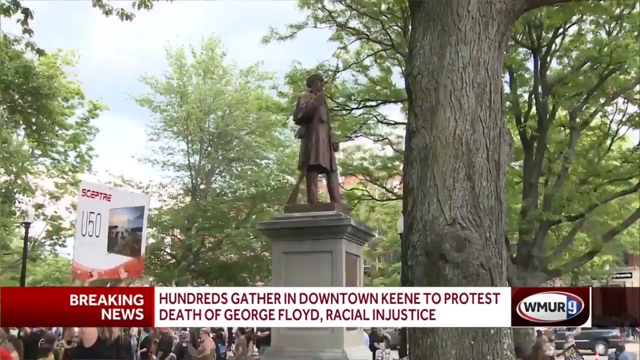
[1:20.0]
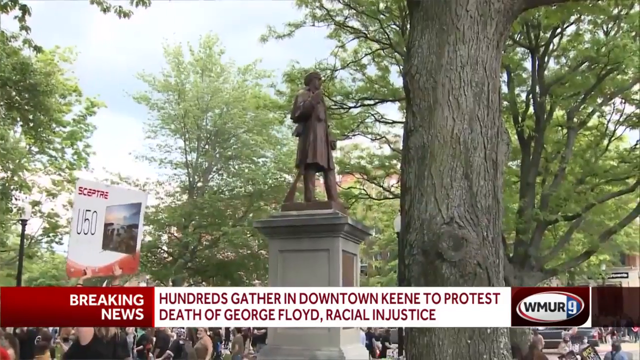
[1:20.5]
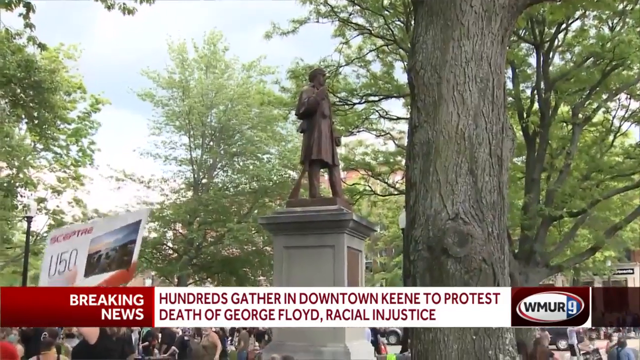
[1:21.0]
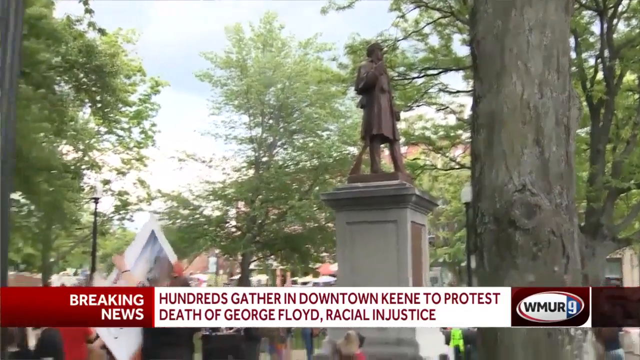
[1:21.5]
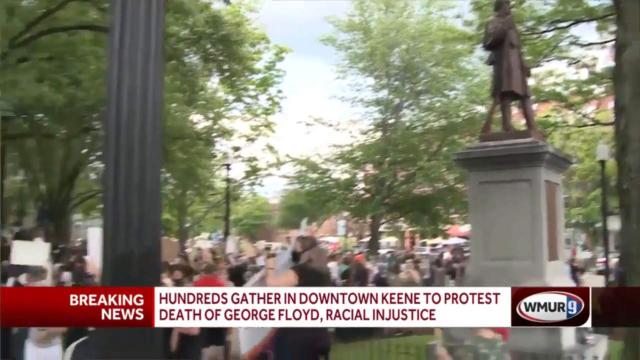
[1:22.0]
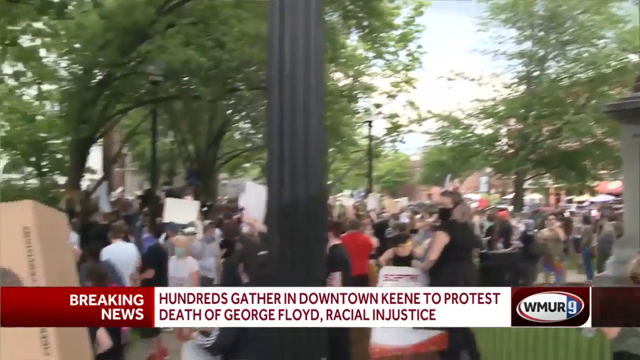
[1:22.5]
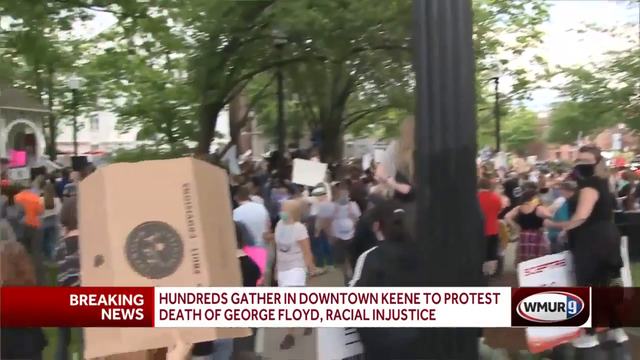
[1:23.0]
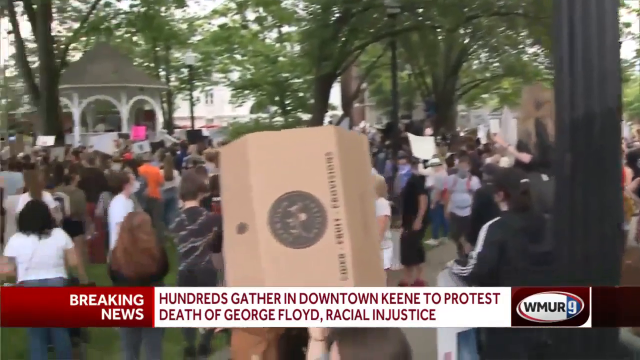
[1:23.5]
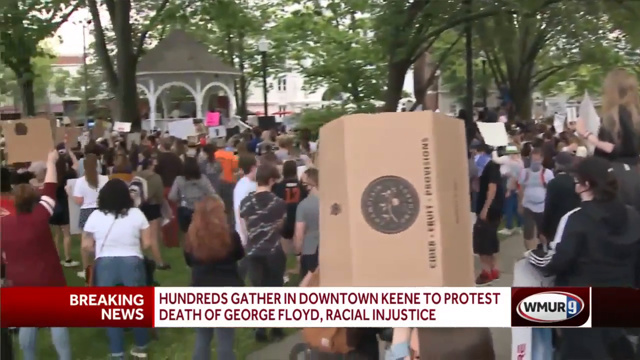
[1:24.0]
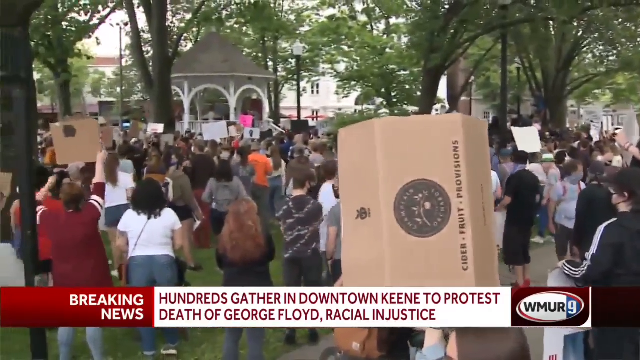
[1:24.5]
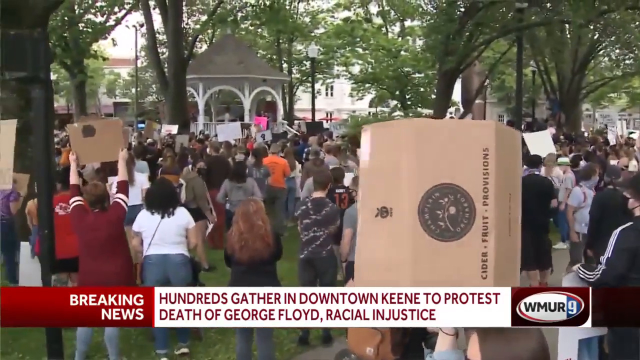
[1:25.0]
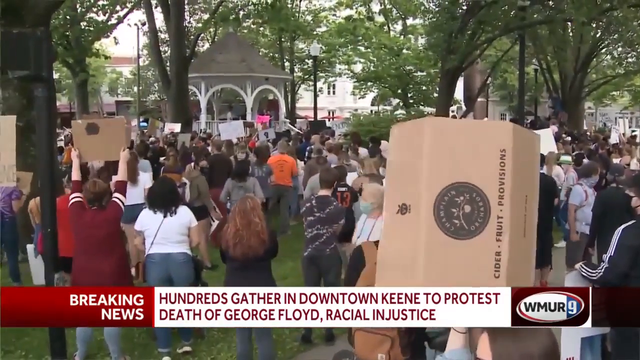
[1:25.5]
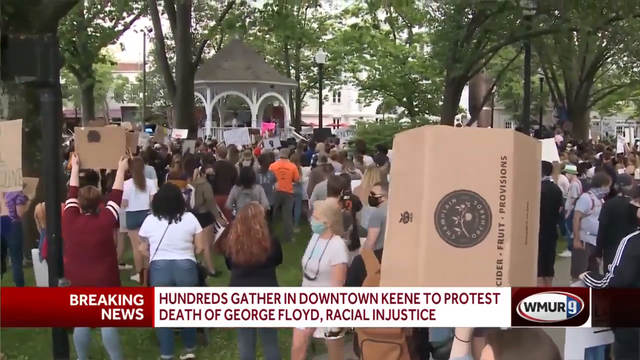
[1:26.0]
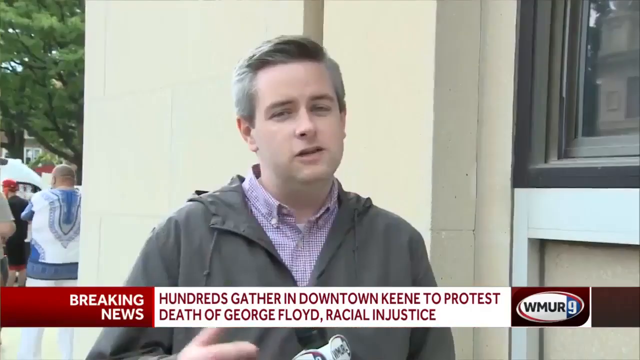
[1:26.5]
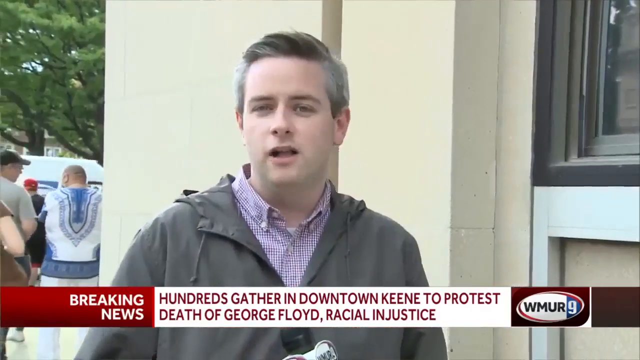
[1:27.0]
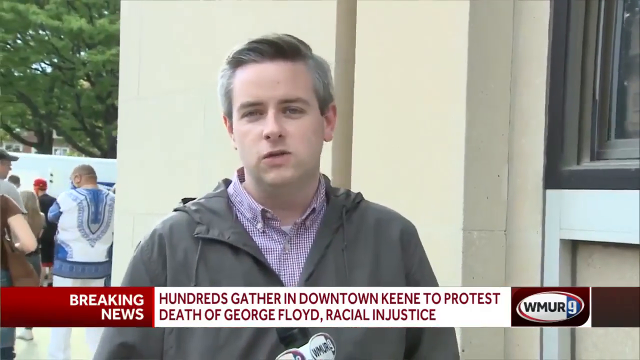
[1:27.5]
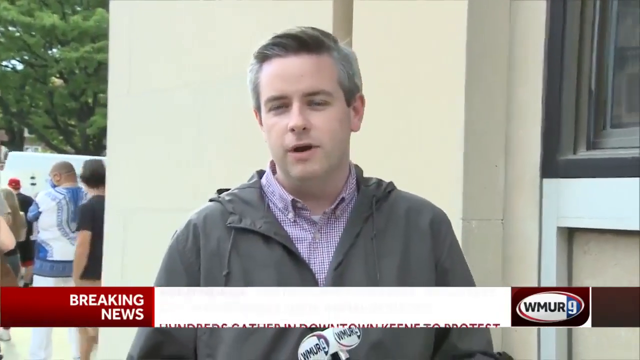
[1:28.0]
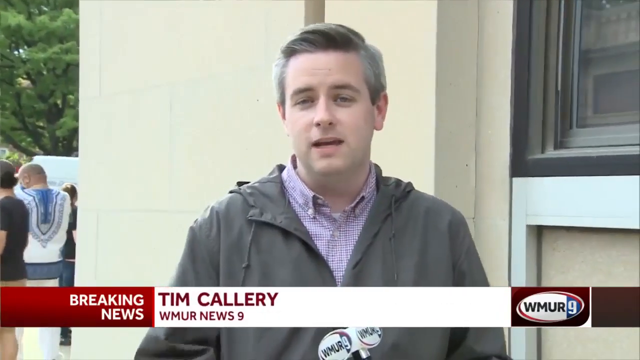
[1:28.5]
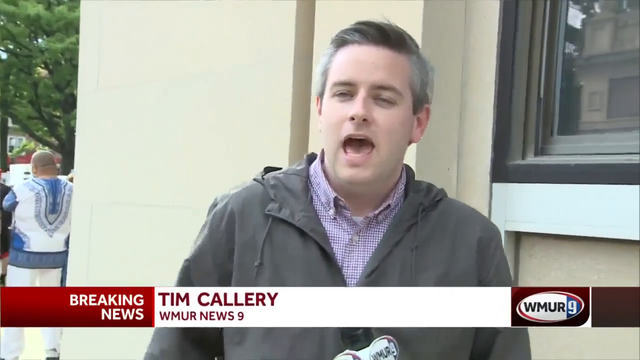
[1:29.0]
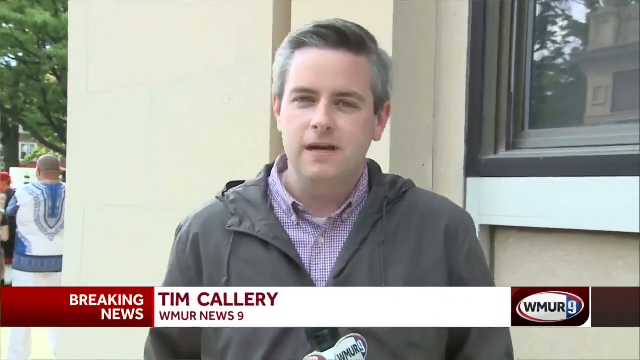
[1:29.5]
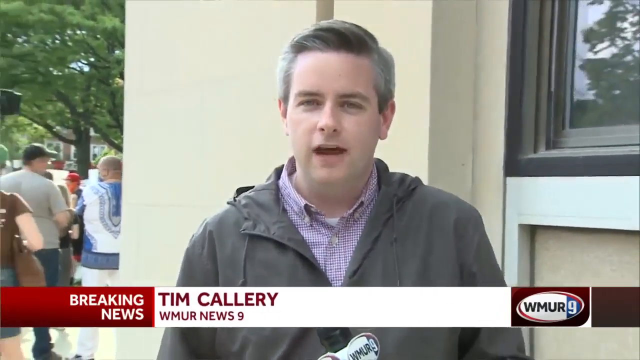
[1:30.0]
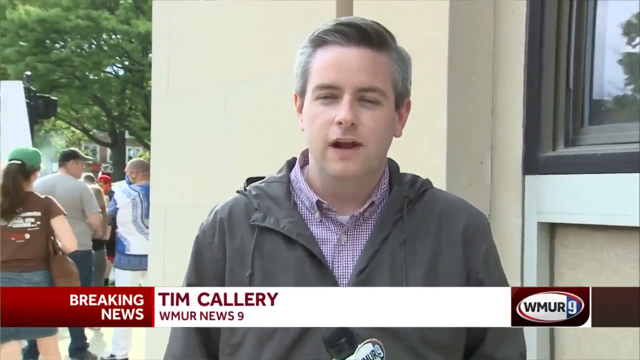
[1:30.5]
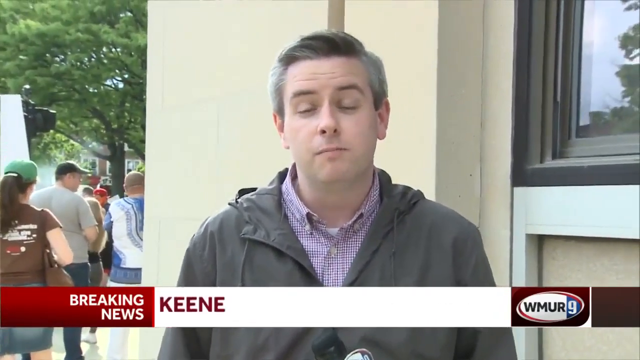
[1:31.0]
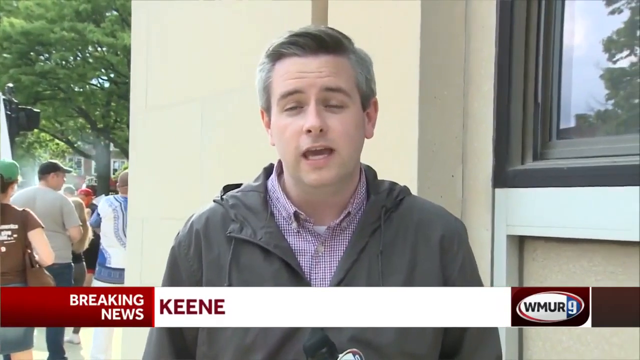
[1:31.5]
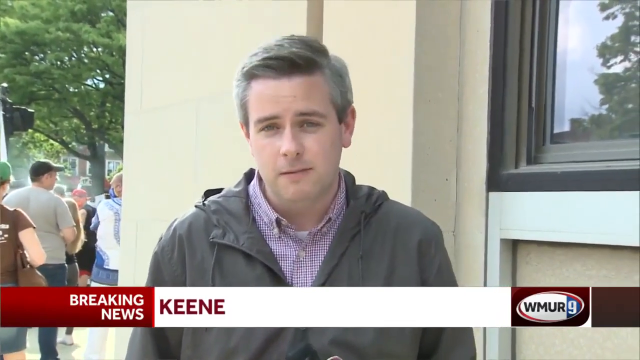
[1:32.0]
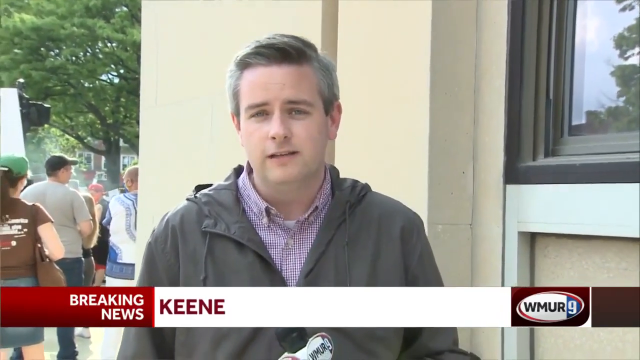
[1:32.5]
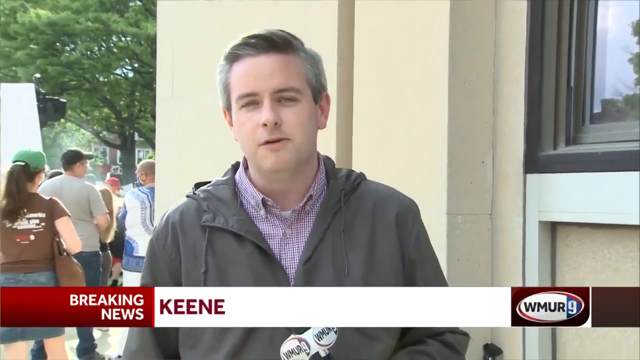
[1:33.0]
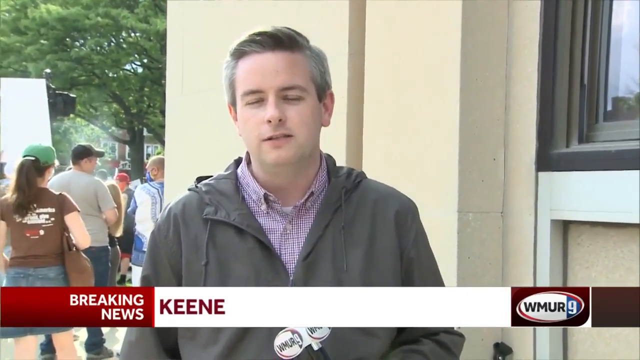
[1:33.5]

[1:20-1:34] The protest against the killing of George Floyd continues. Protesters' messages include "keep on pushing," "it's not enough," "Black Lives Matter," "I can't breathe," "justice for George" and "equality for all."